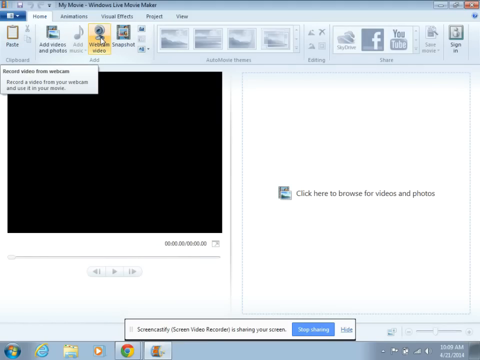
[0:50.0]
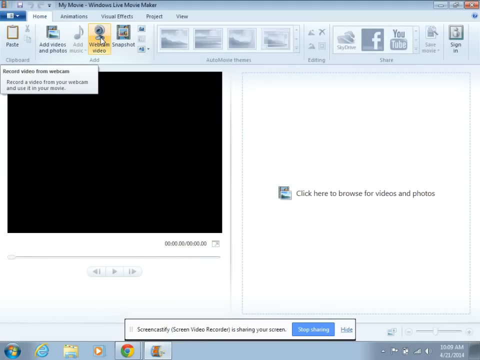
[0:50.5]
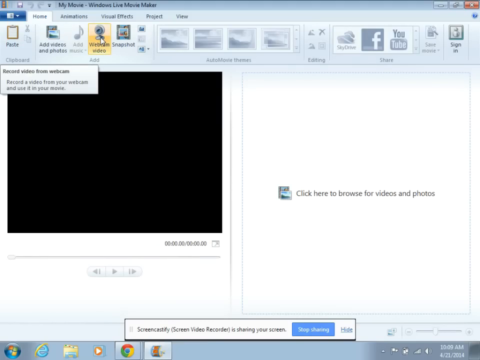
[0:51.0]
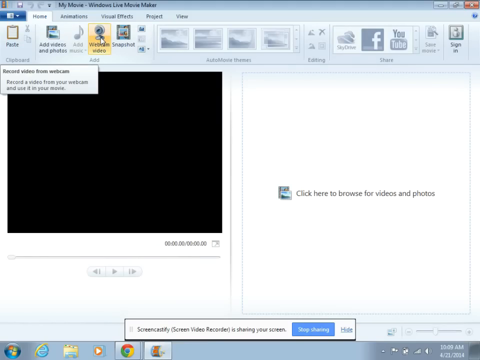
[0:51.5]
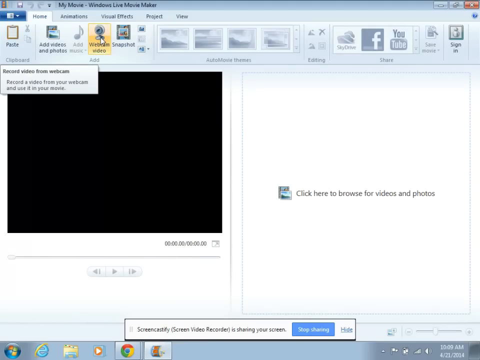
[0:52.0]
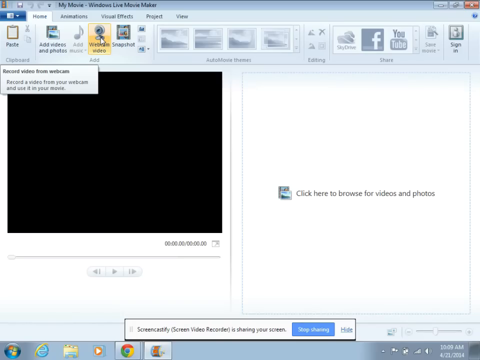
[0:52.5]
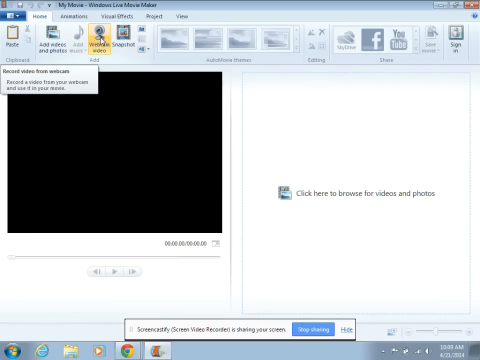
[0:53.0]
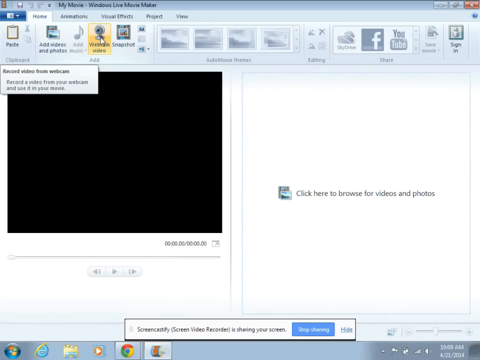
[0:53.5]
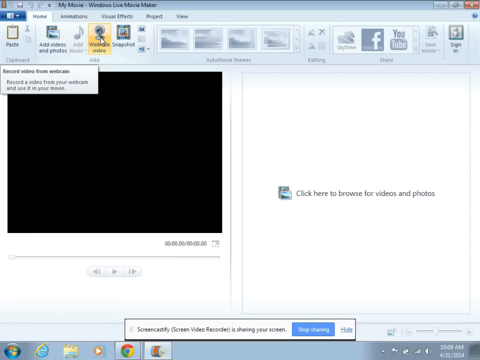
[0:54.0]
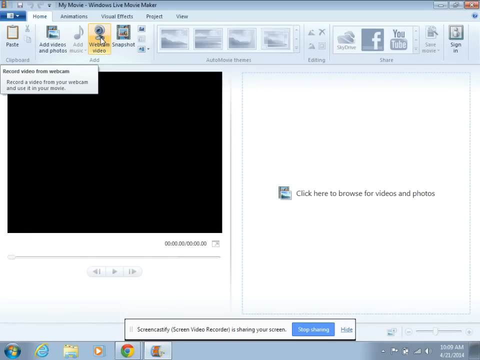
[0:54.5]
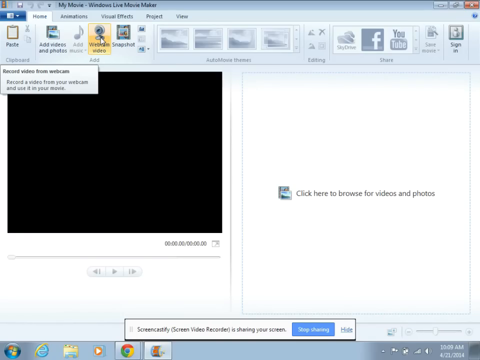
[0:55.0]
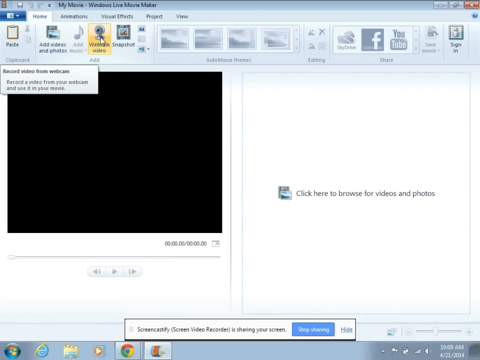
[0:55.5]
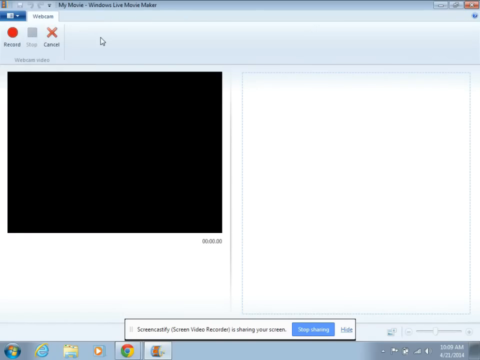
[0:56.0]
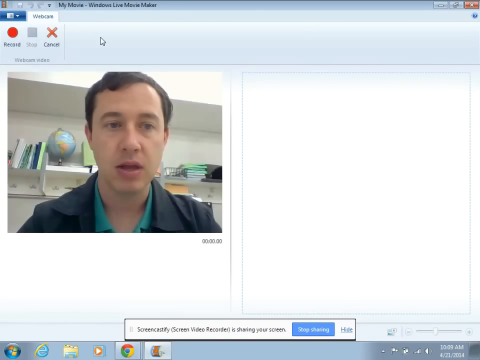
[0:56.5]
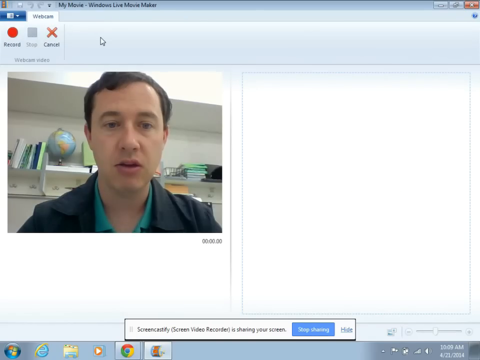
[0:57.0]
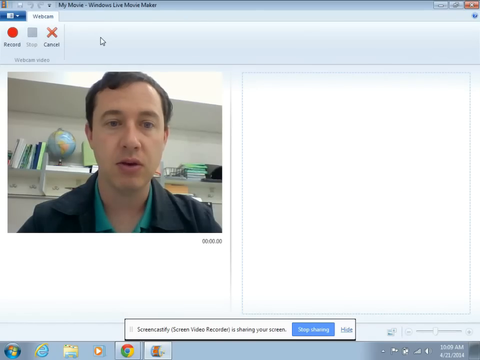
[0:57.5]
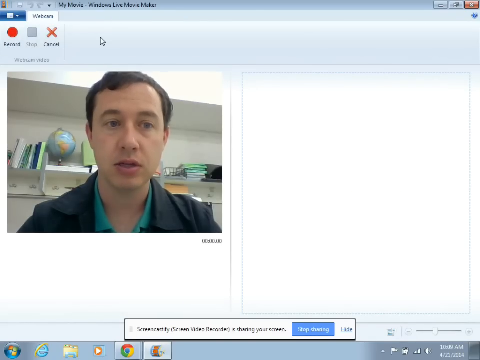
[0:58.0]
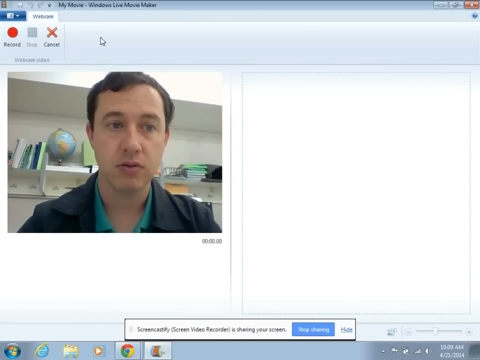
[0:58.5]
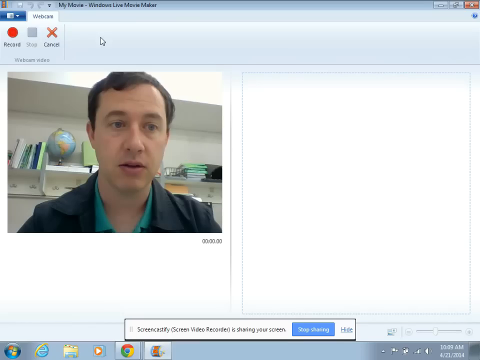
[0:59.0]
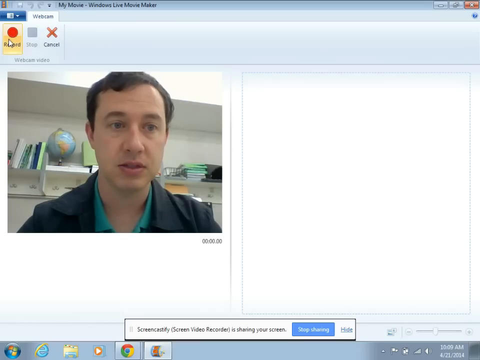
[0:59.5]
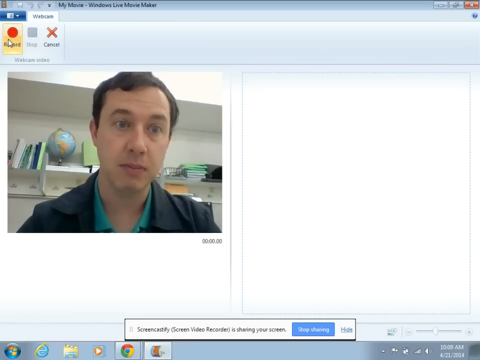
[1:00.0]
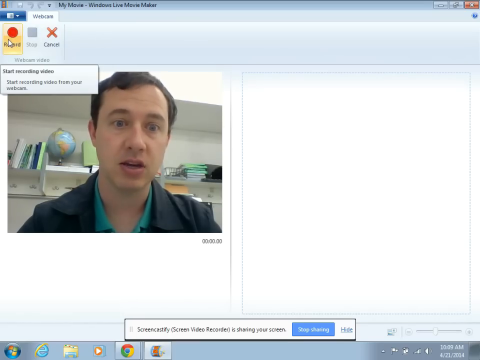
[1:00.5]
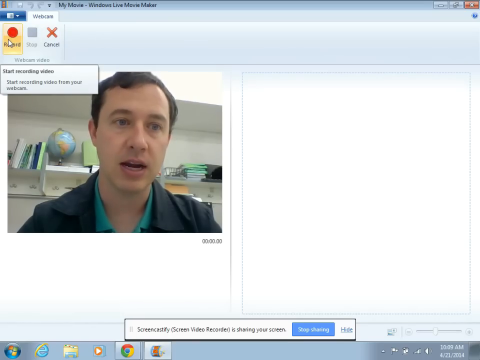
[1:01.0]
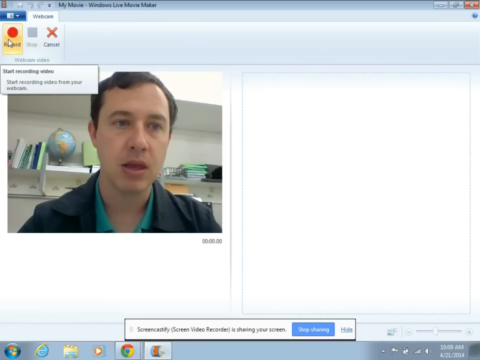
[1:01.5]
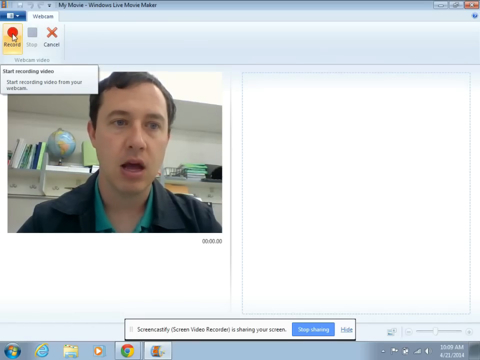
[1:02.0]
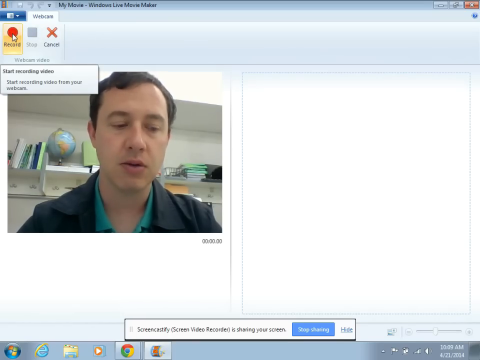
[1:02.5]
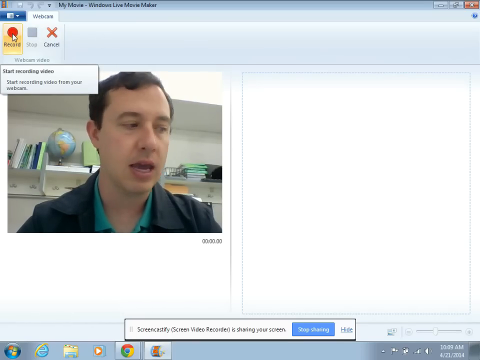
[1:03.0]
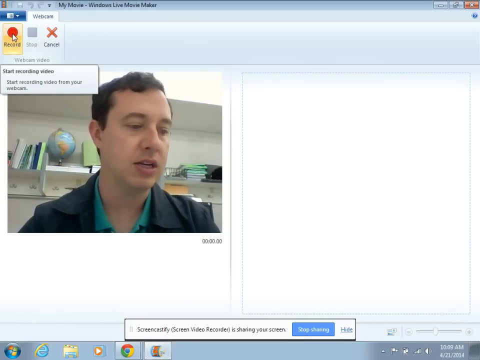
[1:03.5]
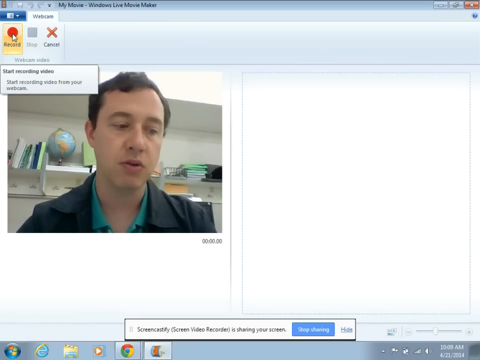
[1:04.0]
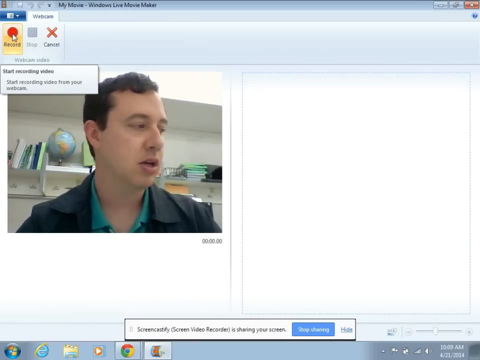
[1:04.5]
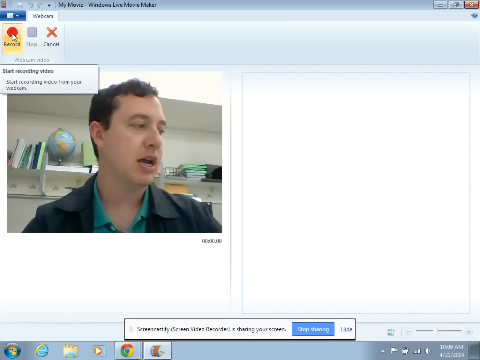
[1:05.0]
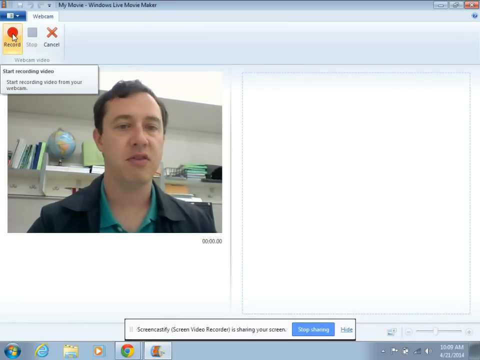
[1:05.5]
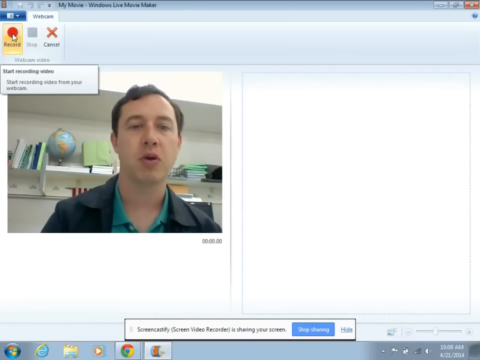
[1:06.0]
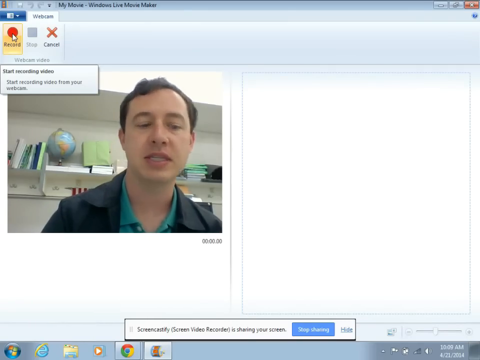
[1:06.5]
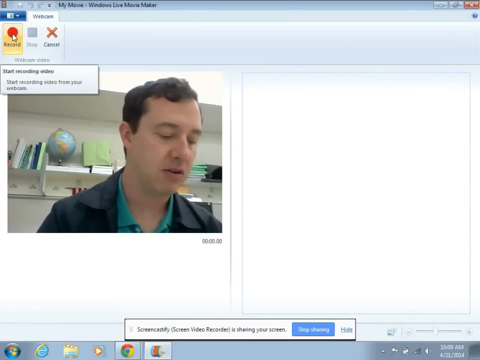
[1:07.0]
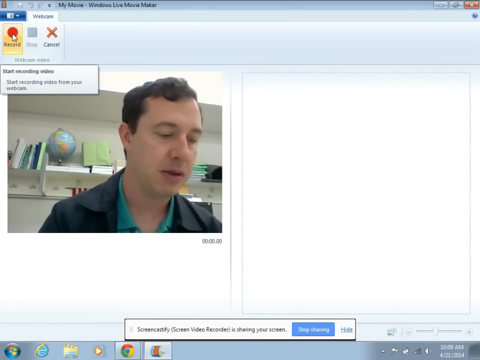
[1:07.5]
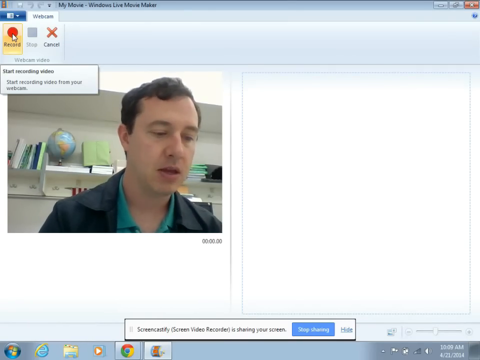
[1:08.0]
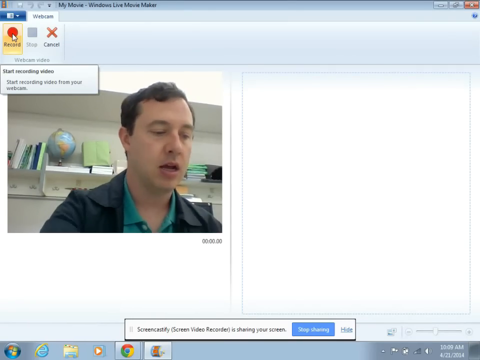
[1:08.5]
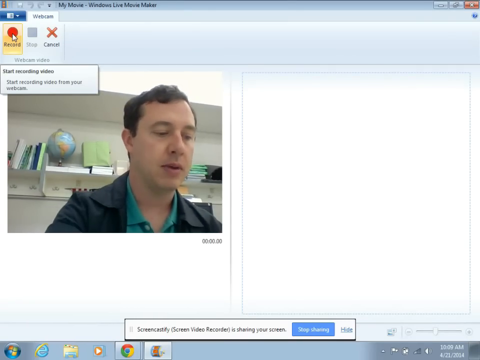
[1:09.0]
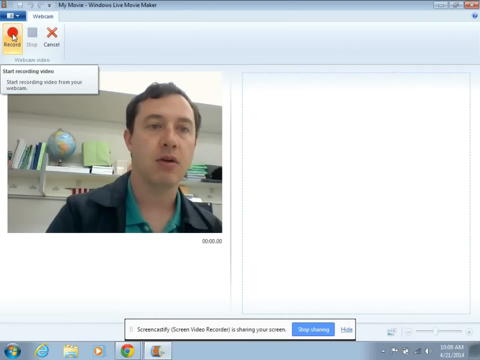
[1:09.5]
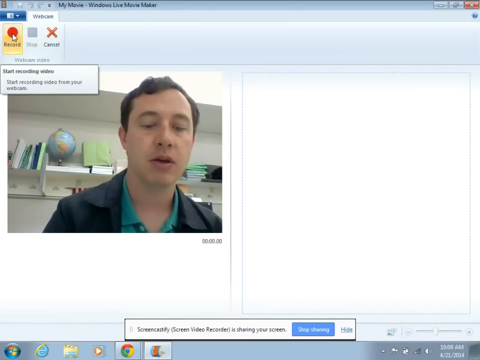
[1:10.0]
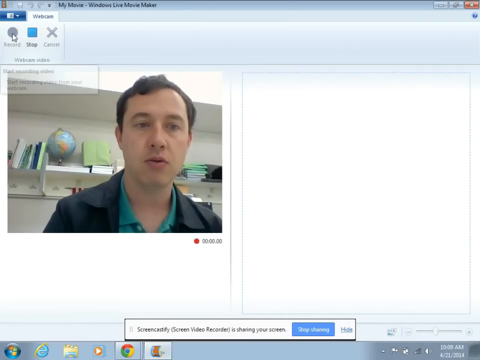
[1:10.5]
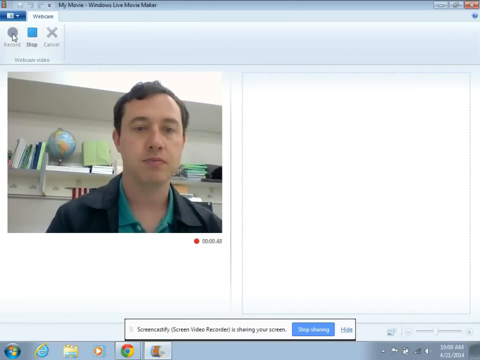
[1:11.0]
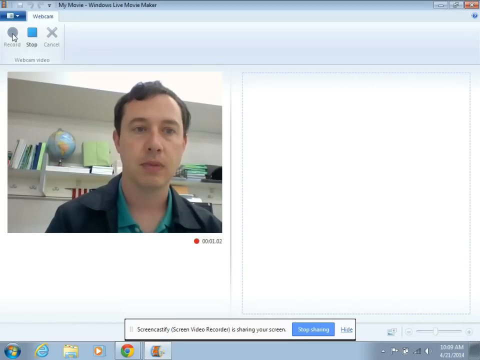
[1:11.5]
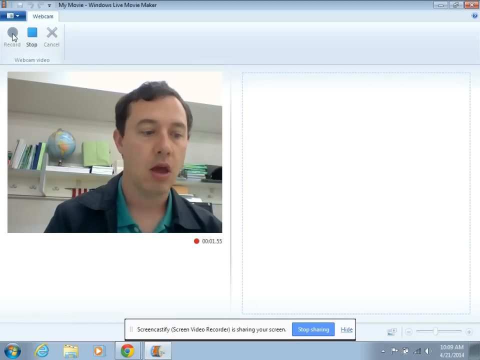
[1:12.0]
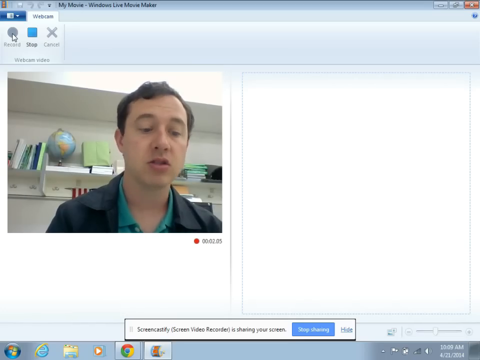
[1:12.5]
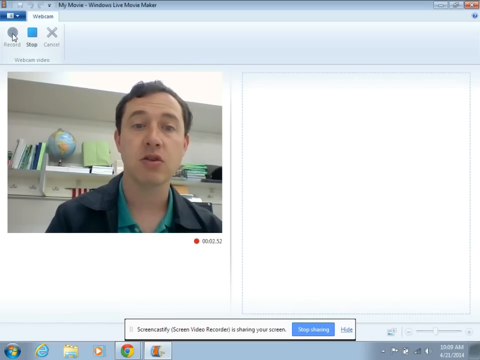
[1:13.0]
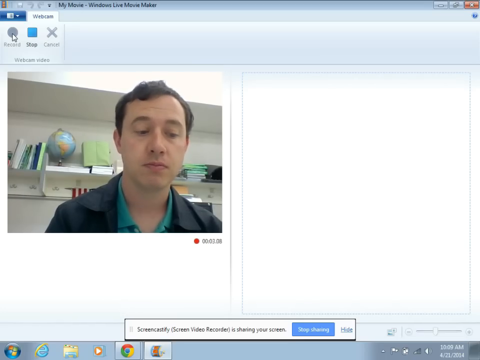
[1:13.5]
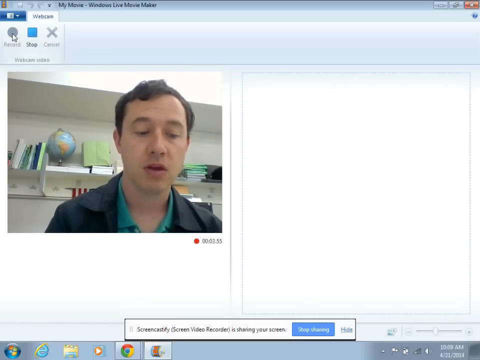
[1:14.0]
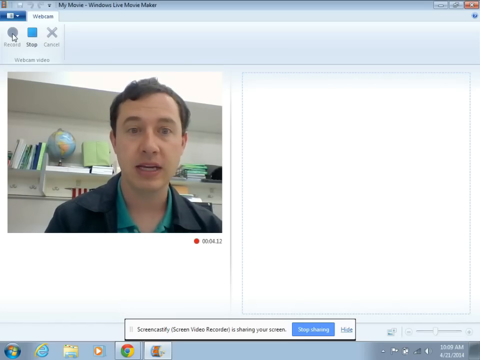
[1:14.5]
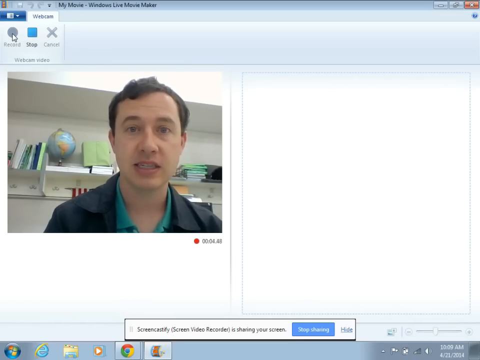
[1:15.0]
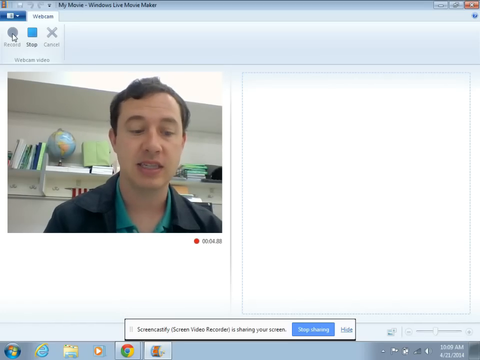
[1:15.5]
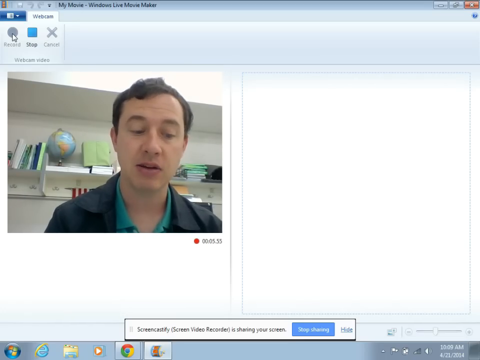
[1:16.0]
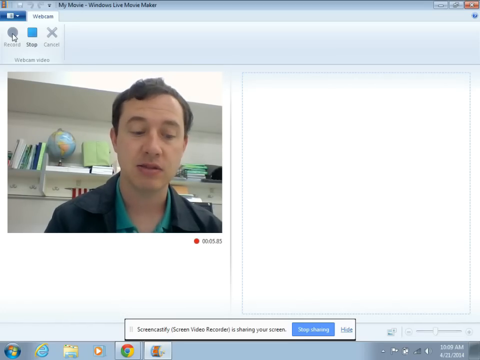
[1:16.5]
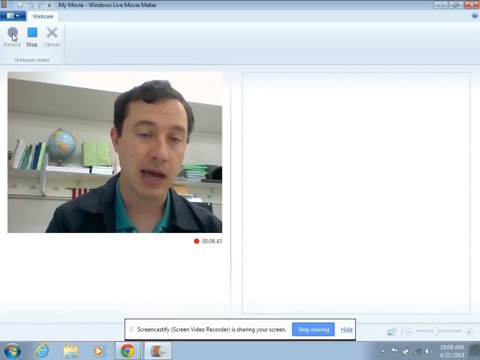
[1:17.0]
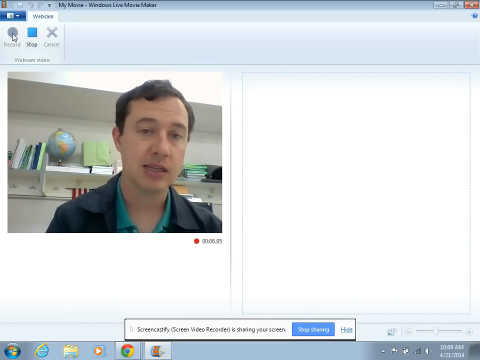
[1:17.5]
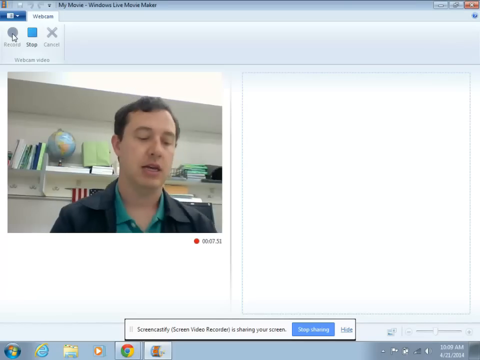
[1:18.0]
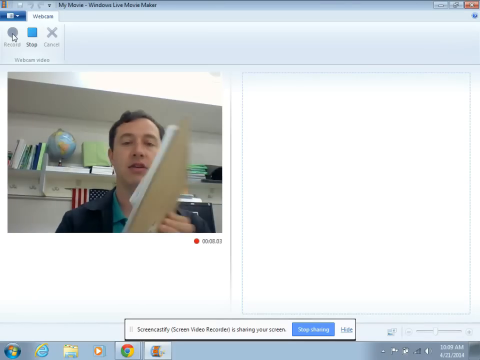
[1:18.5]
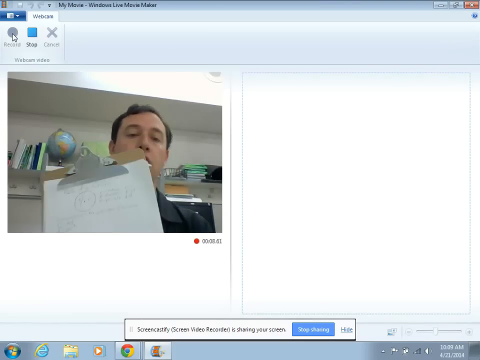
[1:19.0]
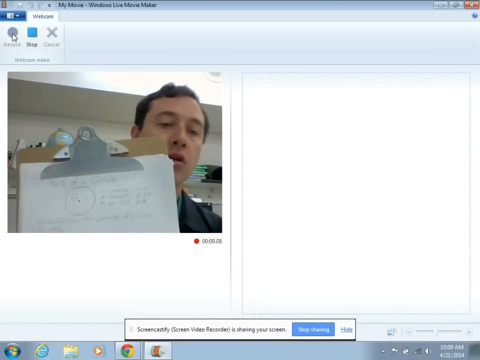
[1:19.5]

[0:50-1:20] The application is open, and shortly afterward a man appears on the screen, starting his camera and speaking directly into it. From his appearance he looks like a teacher. The man picks up a clipboard and starts writing on it, then holds the clipboard up to the camera, but what is written on it cannot be made out.